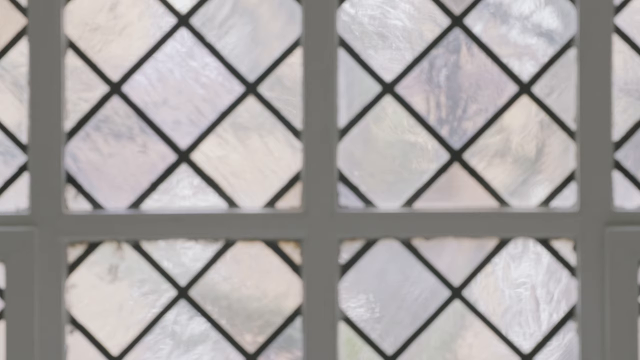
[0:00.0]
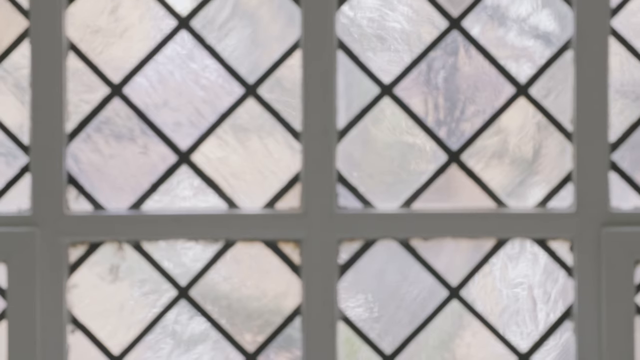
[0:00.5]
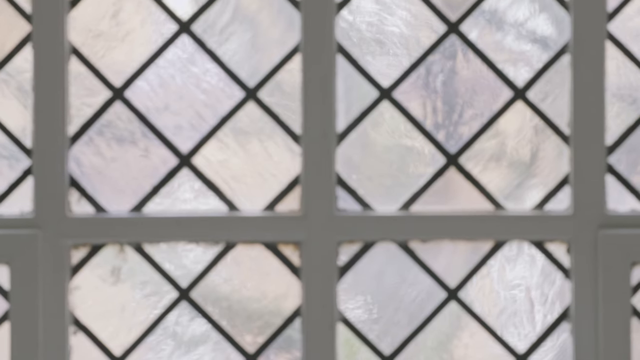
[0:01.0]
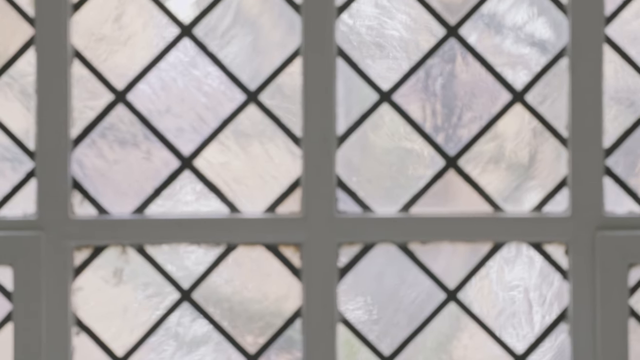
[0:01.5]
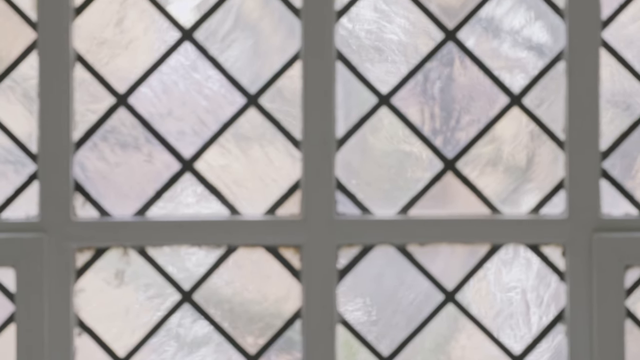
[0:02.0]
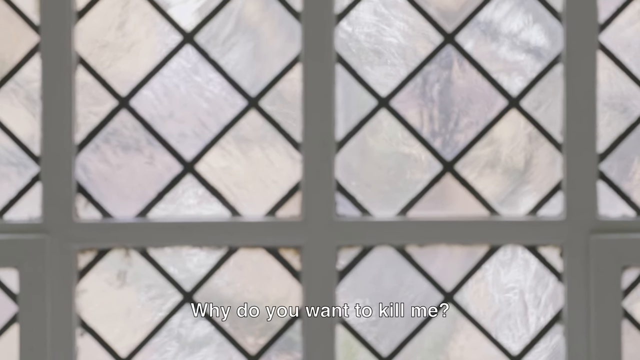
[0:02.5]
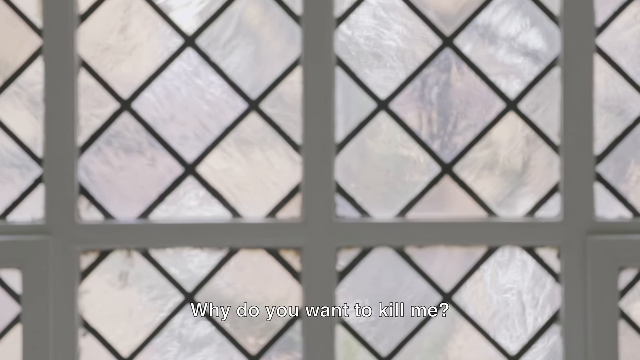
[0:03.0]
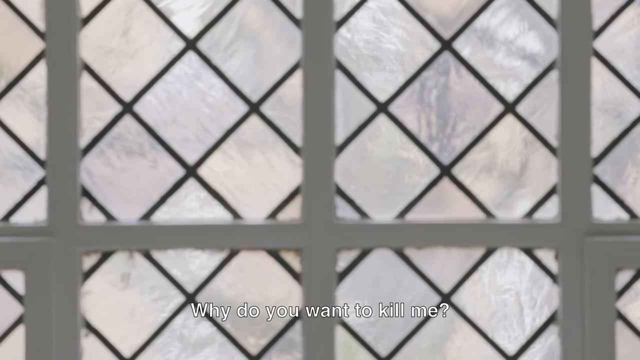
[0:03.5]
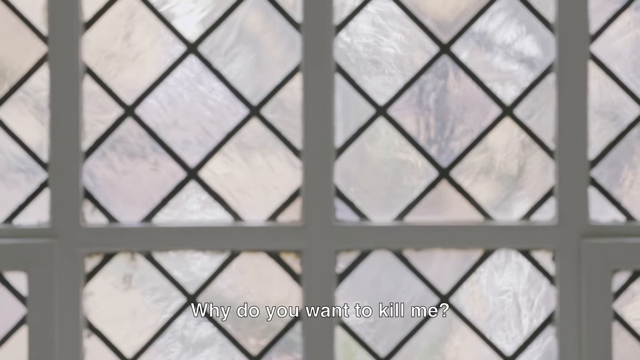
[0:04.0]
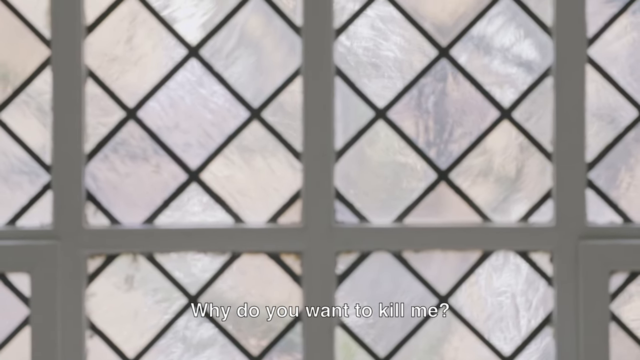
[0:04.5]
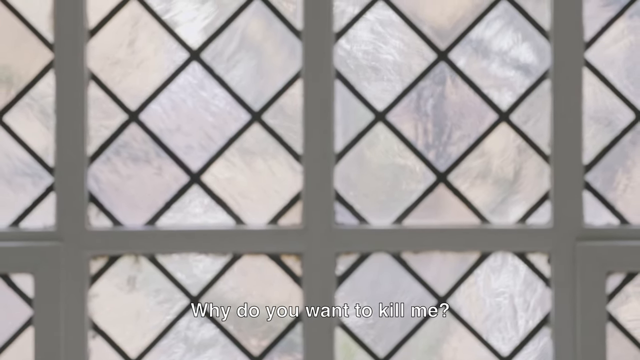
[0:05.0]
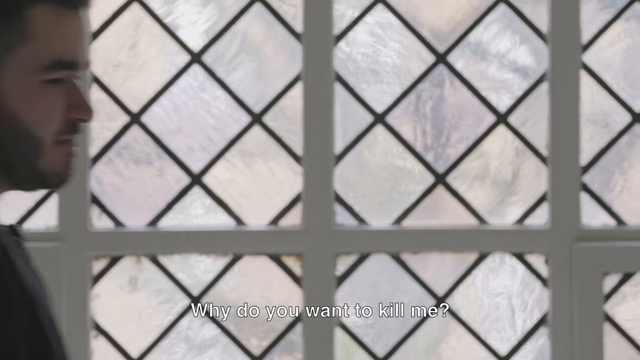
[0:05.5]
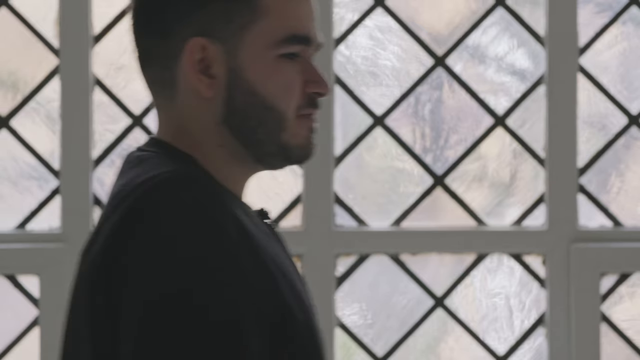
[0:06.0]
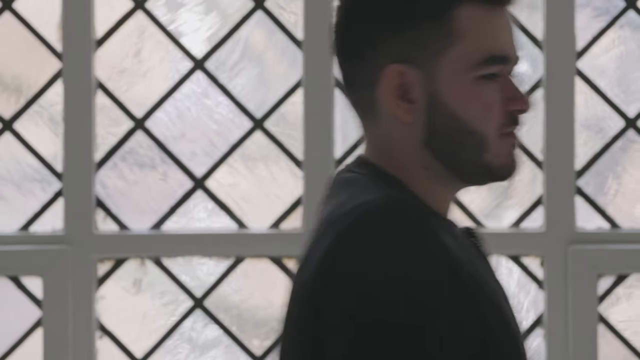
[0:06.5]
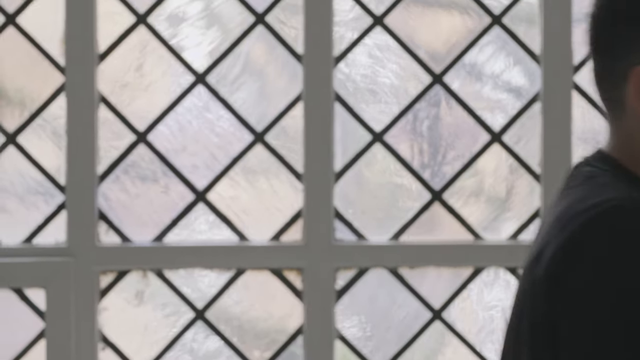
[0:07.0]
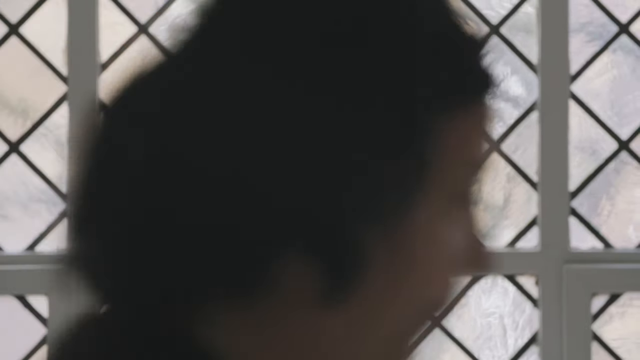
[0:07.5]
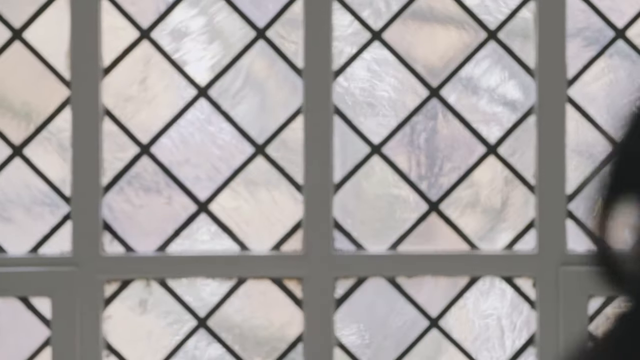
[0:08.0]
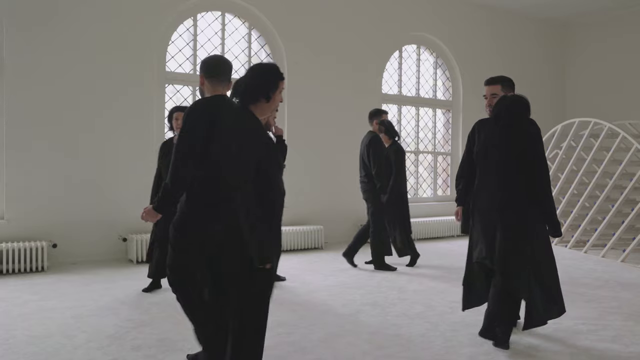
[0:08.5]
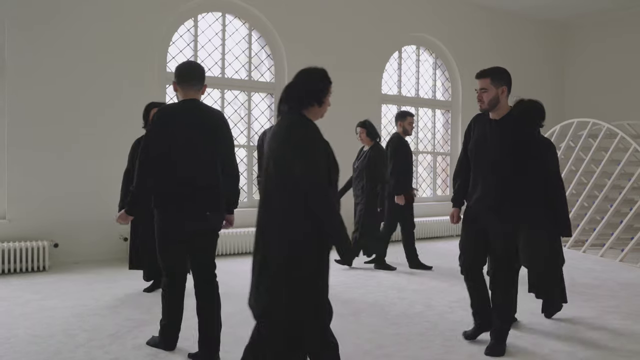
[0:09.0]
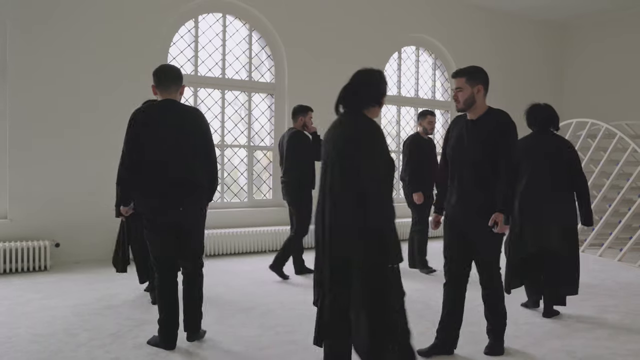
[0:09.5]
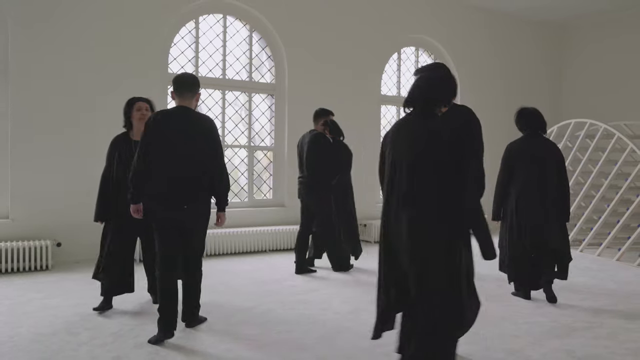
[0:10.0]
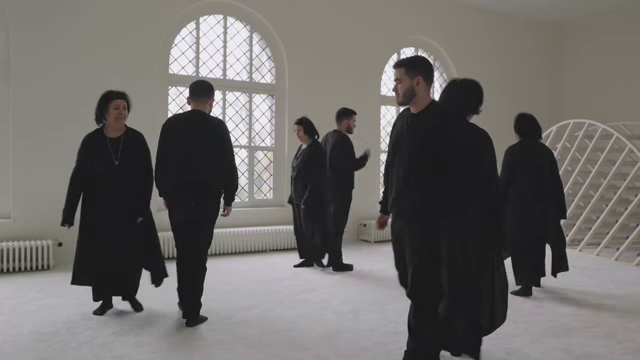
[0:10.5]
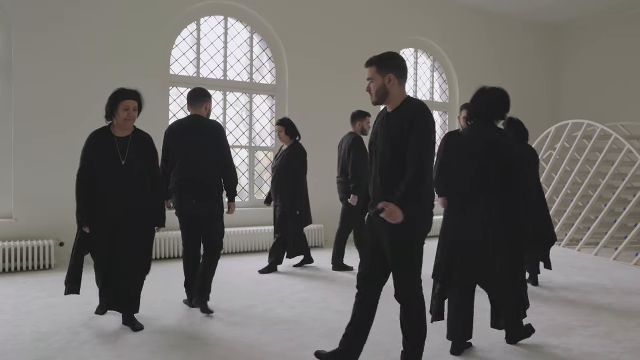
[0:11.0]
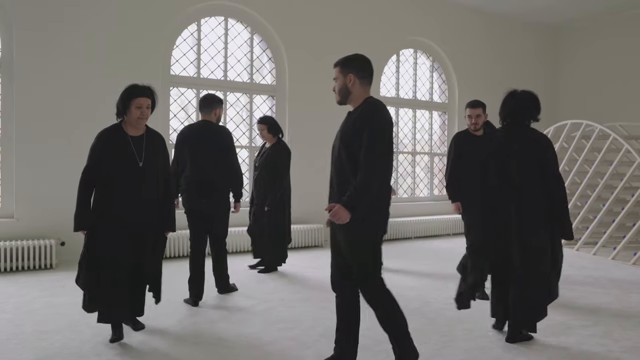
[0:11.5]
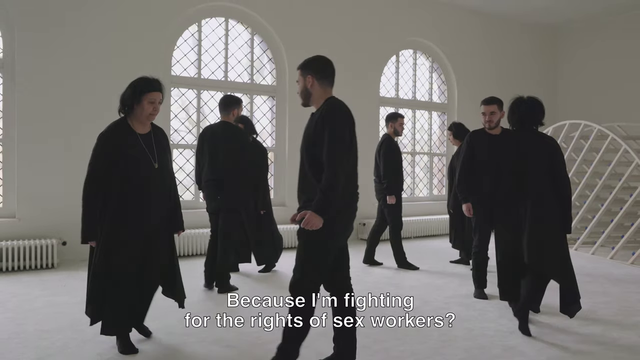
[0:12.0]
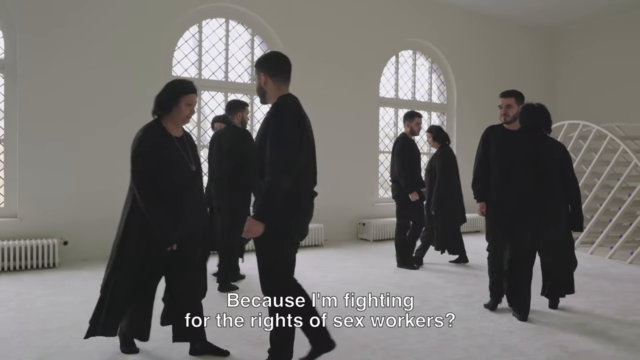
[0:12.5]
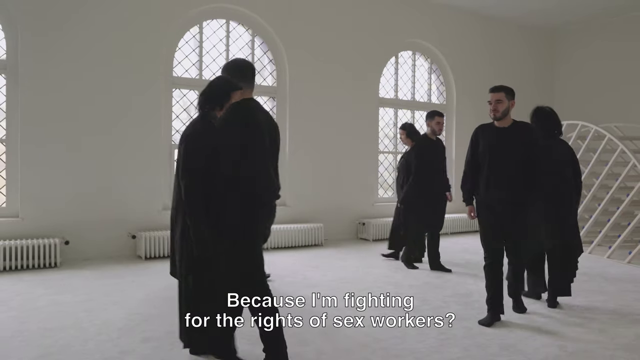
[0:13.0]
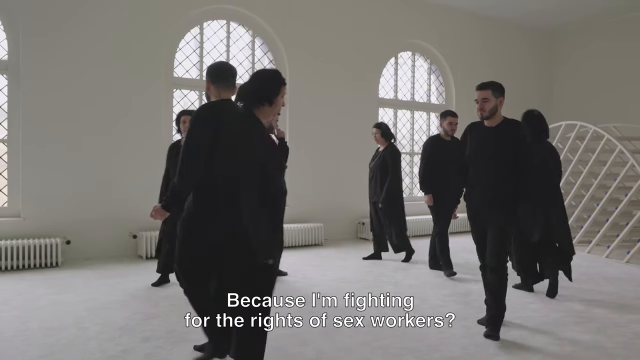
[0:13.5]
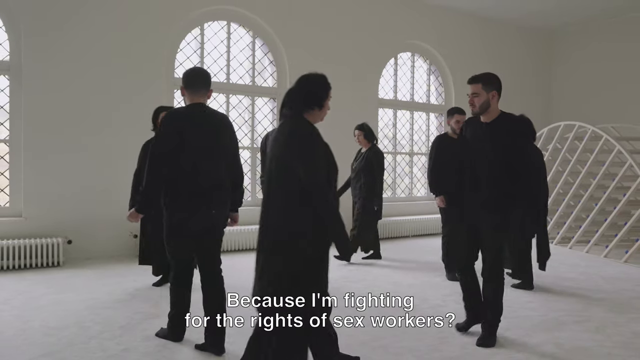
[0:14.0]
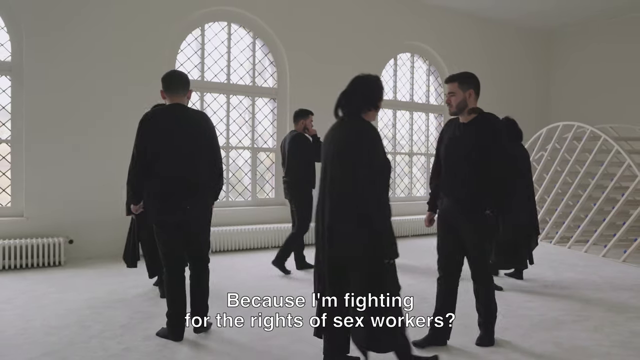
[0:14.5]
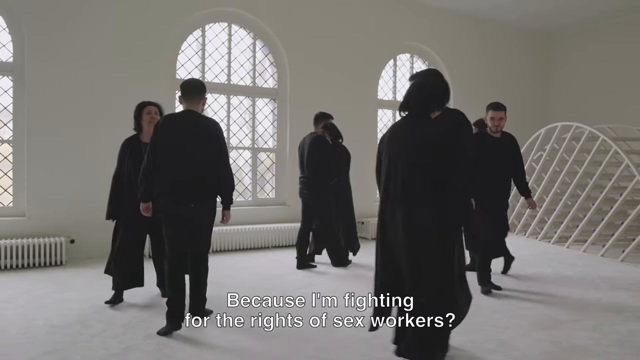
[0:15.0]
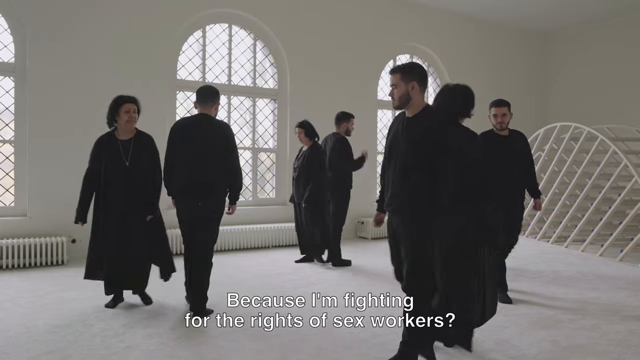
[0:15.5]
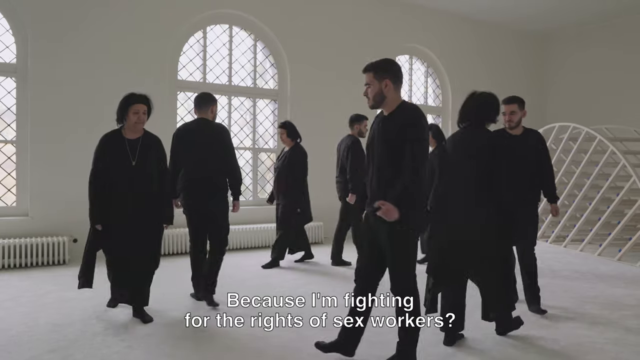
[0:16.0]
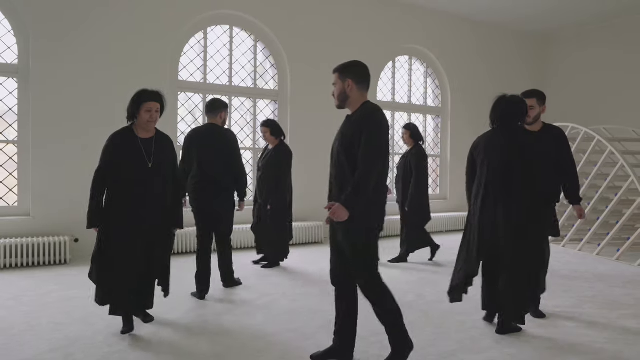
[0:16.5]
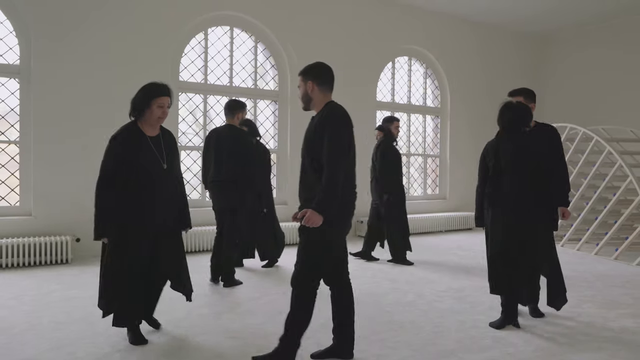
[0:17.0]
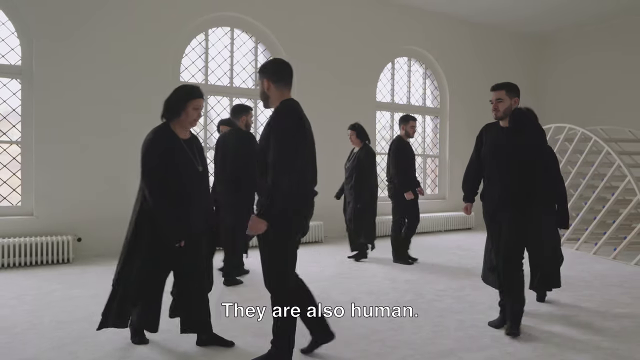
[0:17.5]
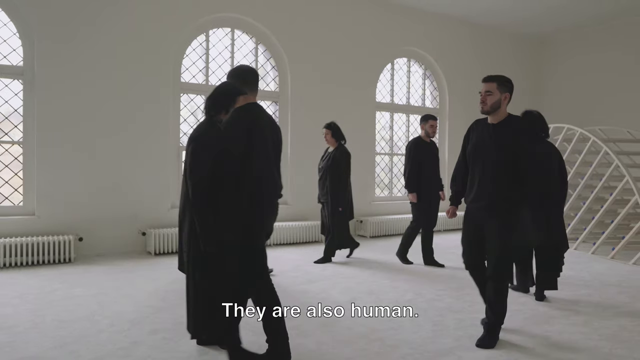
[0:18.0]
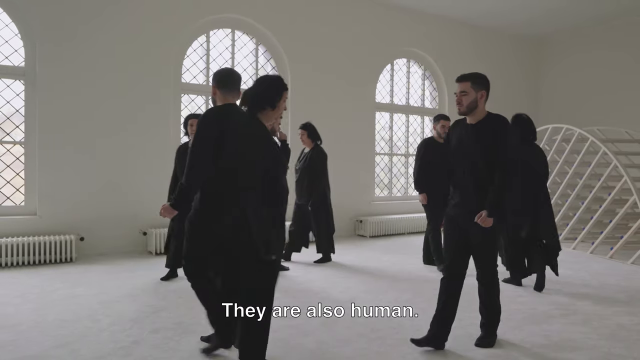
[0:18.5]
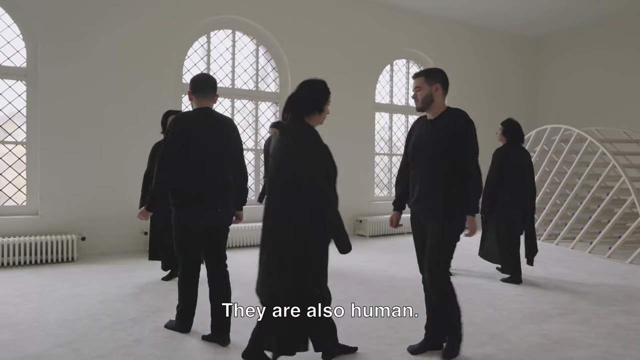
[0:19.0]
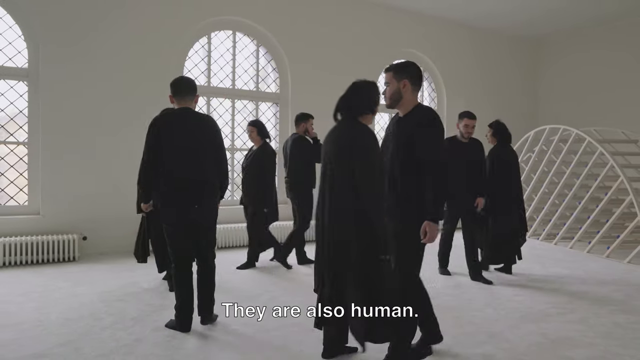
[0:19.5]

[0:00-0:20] The video opens on what looks like some type of gate, with a young man walking along with another man. The shot changes to about nine people walking around, kind of in a circle, pacing back and forth. They are all wearing black clothing. A caption on the screen says something like "What will they do with me"; the words come in pretty light and are not easy to make out. Then it says "because I'm fighting for the rights of sex workers". They are in a building with white walls and very large, decorated windows, walking around on a carpeted floor. Most of the people tend to be young; one of them looks like a lady who might be middle-aged, though her face cannot be seen very well. They wear long black jackets, pants and black shoes, and they all have dark hair. On the right side of where they are there are other structures: one appears to maybe be some type of heating vent, and the other is a large, all-white, plastic-looking structure that is unidentified. It seems to be daytime, as a little sunlight comes through the windows.